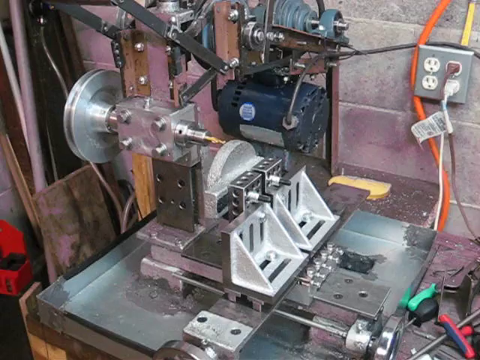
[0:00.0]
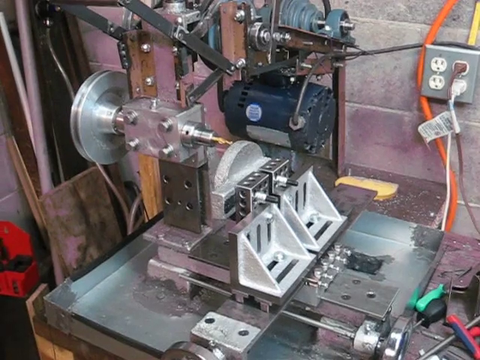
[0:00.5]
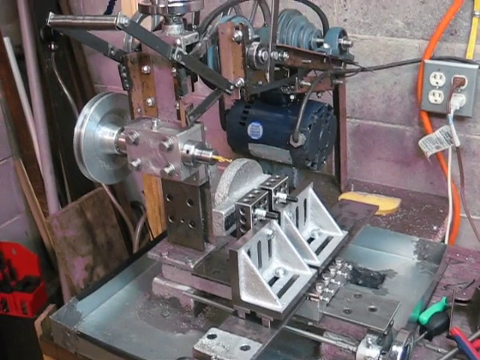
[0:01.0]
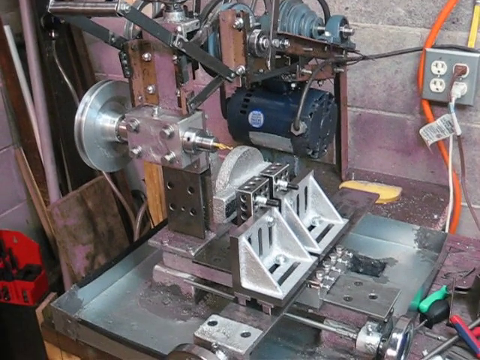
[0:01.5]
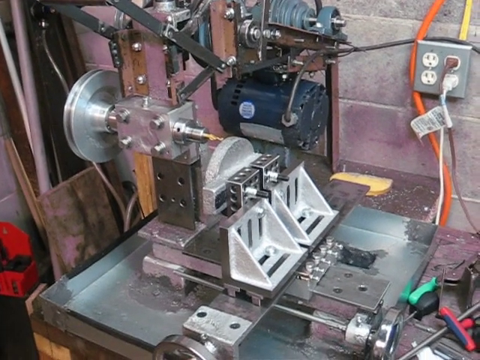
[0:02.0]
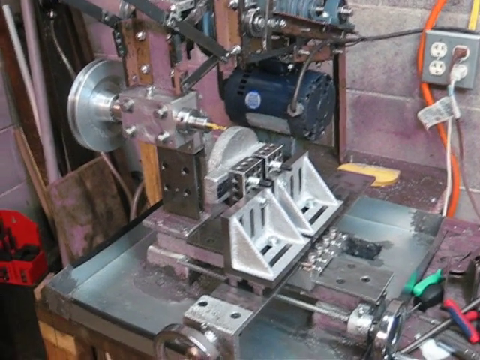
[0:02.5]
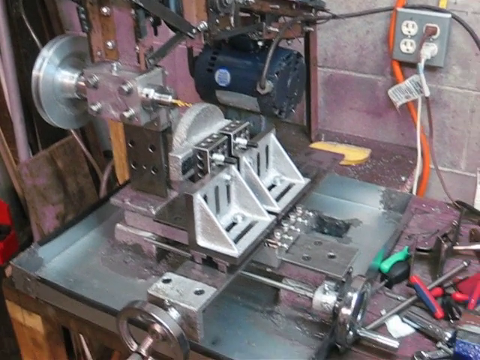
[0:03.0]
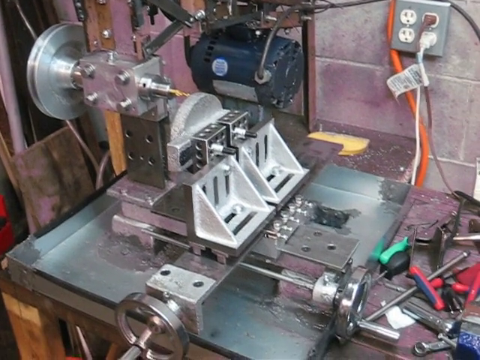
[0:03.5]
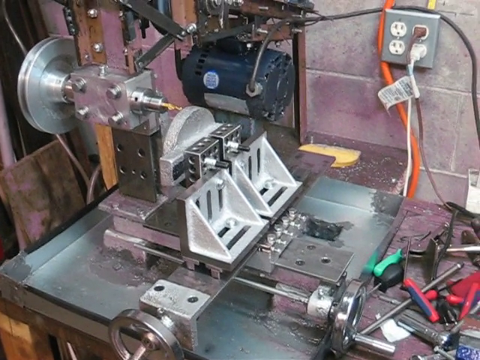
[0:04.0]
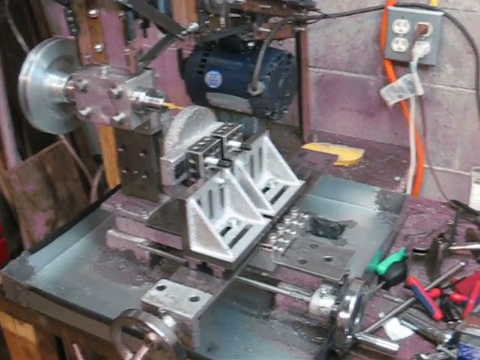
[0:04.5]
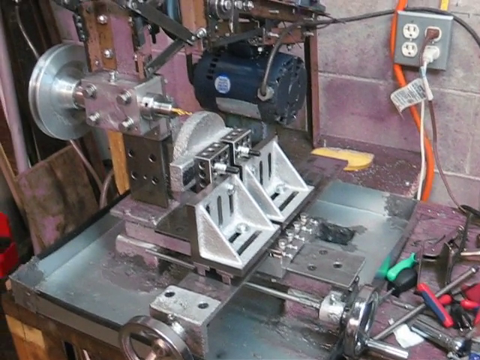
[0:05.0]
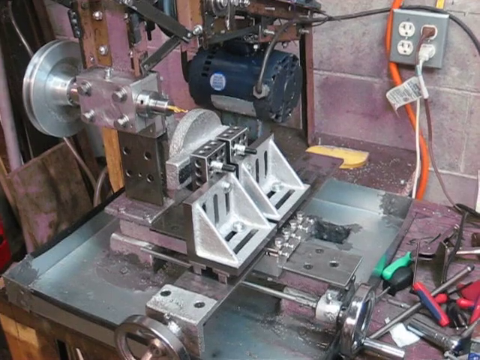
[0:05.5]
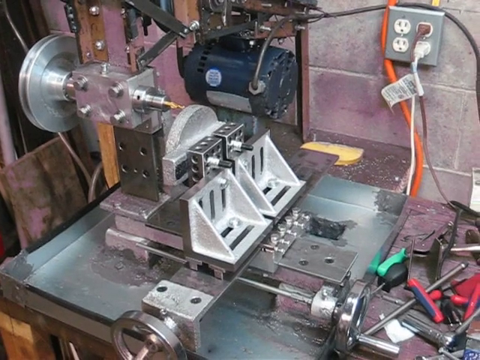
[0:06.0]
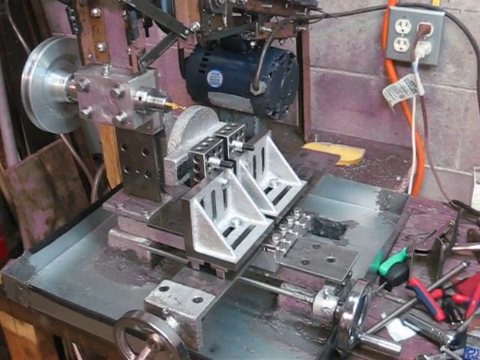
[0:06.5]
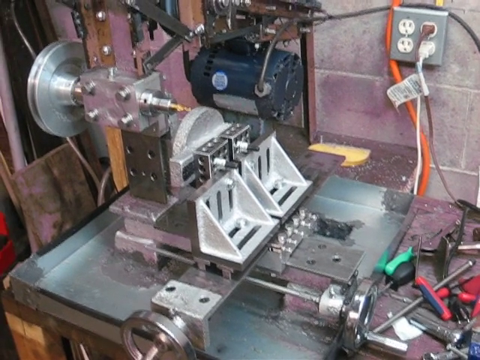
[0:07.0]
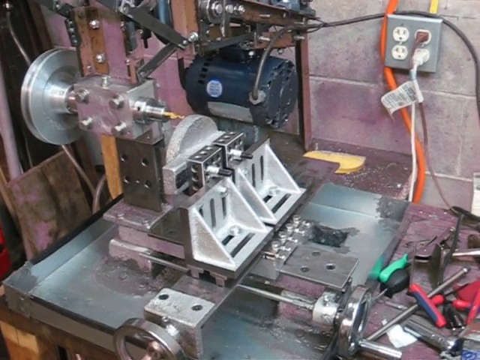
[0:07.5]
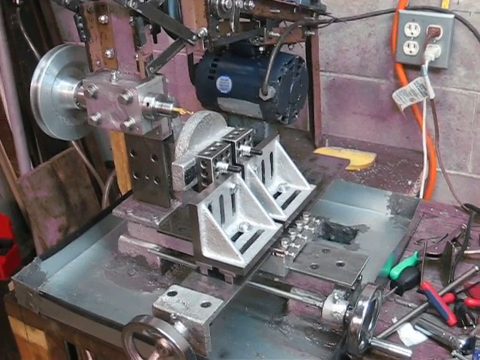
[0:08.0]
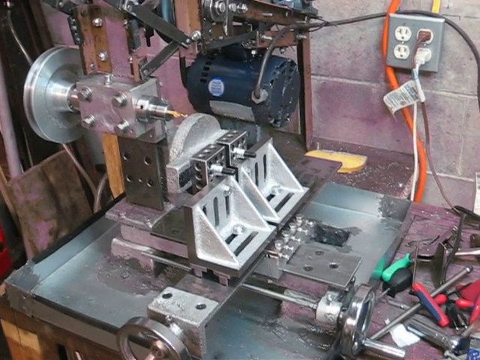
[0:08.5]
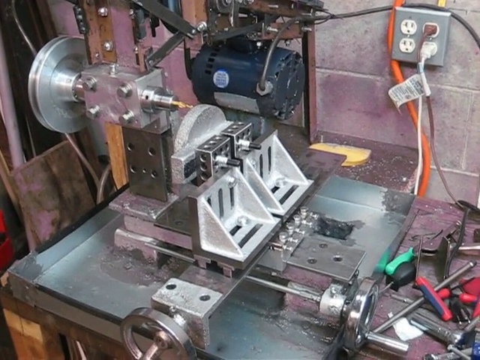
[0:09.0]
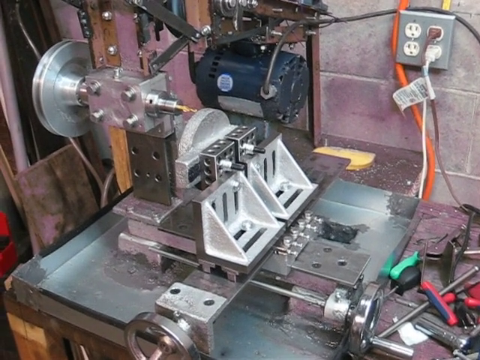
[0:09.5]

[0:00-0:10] A device that seems to be made of metal is attached to an outlet and has many compartments. One part looks like a spinning disc, and on the other side something that kind of looks like a drill comes out of the object, with more metal attachments underneath it. The device is on a table and has both metal and wood attached to it. There is also what looks like a motor encased in black metal, and many bolts are attached to the metal. On the right side are some tools.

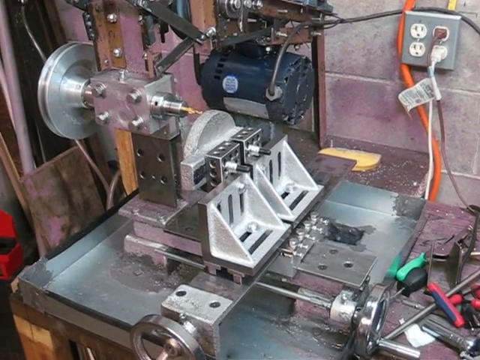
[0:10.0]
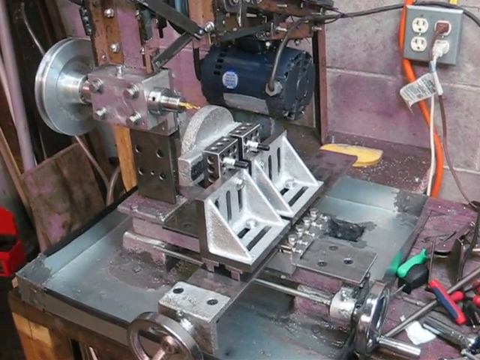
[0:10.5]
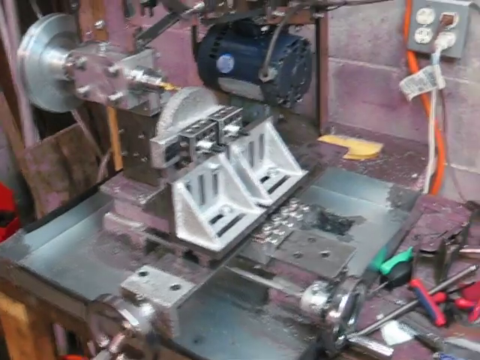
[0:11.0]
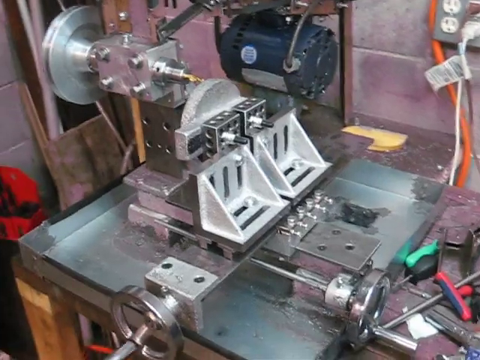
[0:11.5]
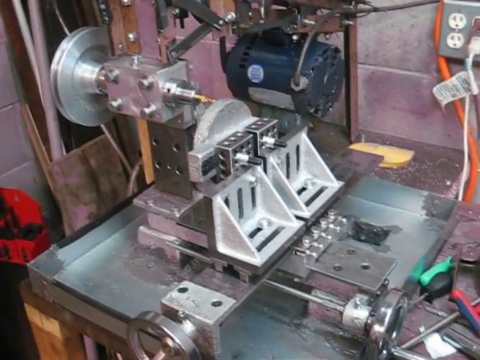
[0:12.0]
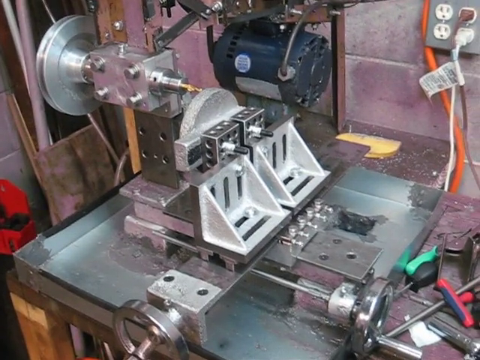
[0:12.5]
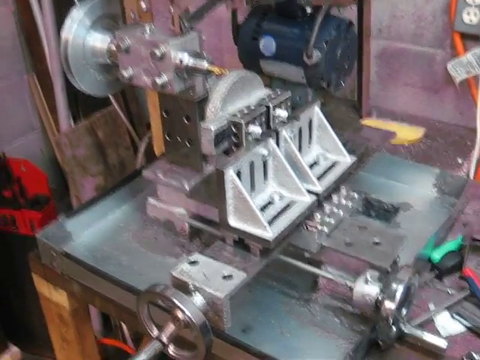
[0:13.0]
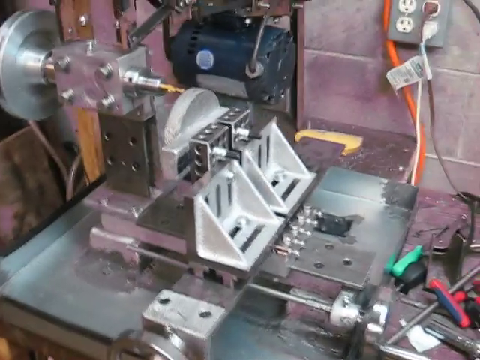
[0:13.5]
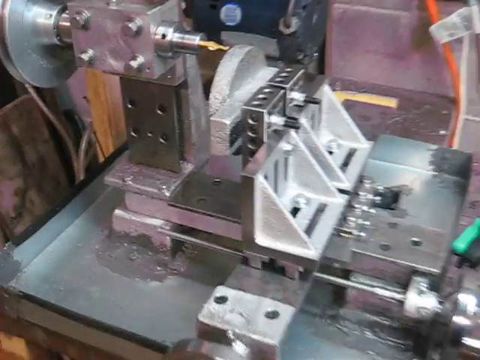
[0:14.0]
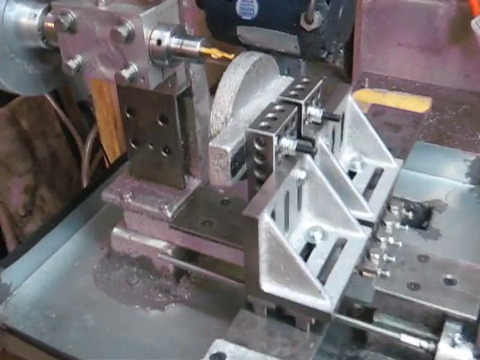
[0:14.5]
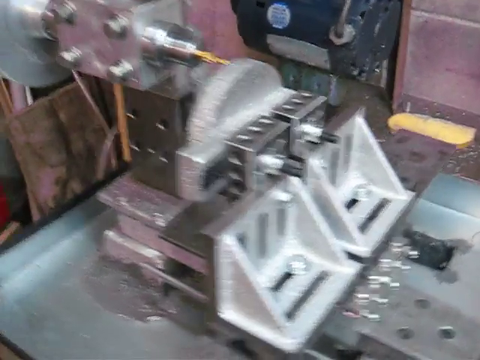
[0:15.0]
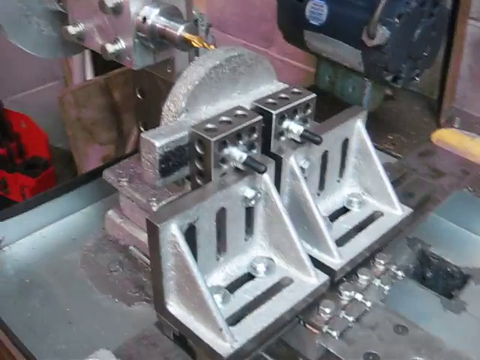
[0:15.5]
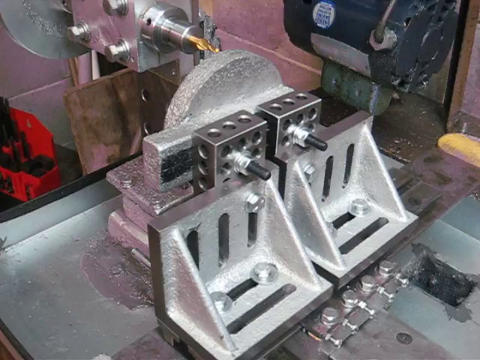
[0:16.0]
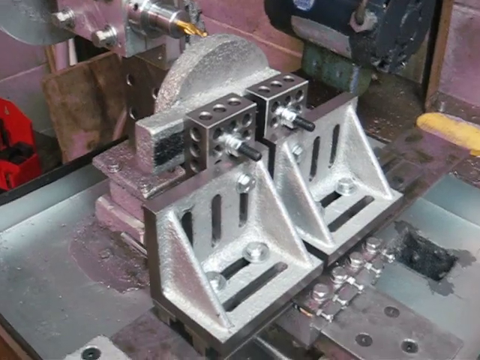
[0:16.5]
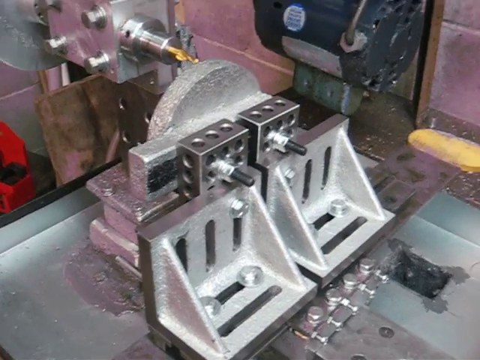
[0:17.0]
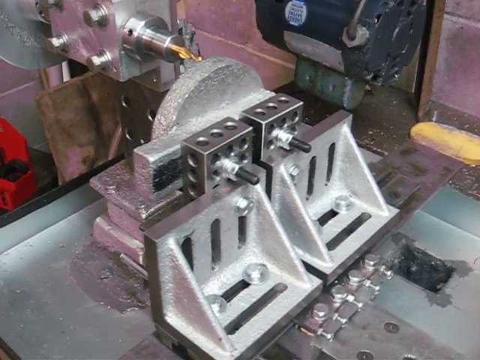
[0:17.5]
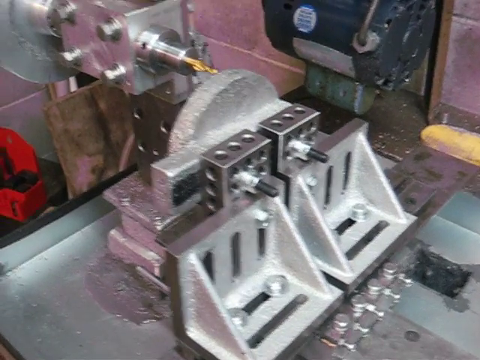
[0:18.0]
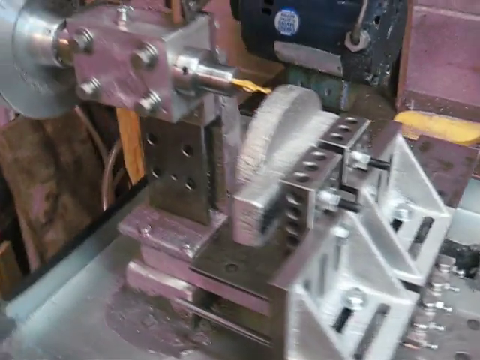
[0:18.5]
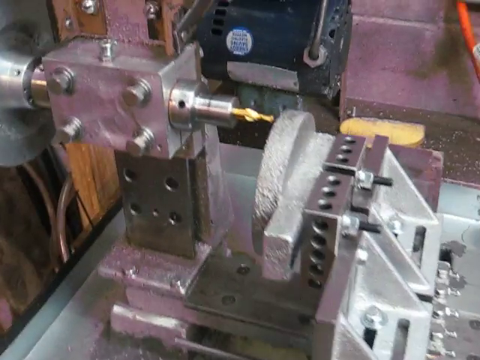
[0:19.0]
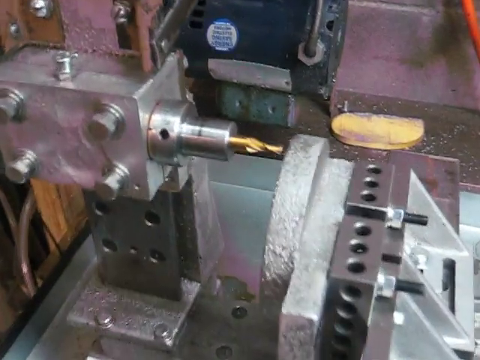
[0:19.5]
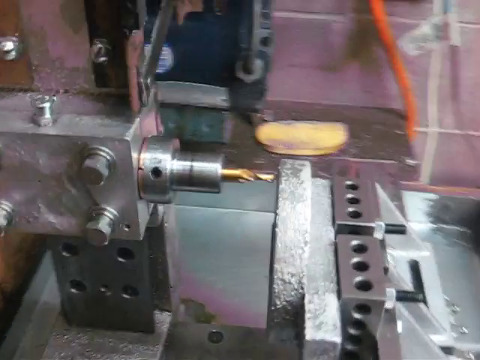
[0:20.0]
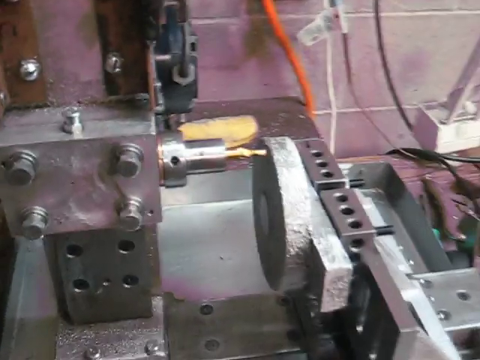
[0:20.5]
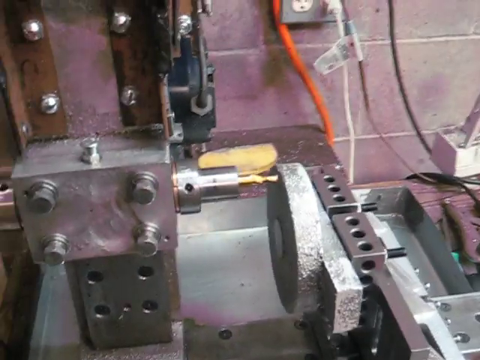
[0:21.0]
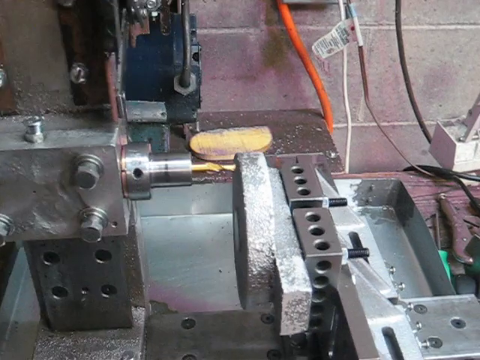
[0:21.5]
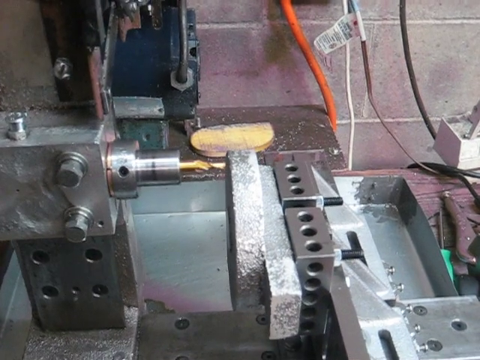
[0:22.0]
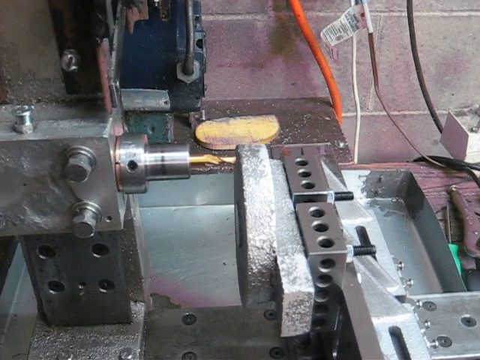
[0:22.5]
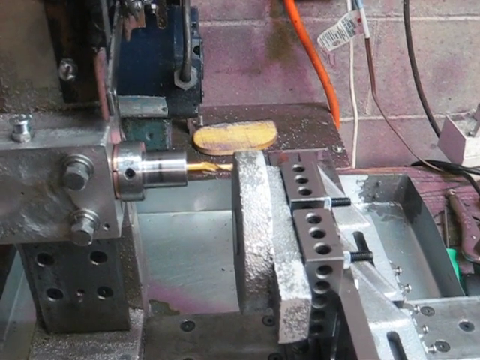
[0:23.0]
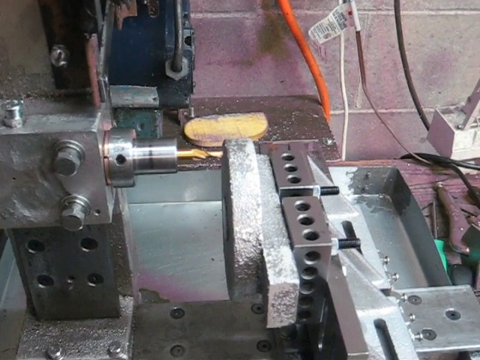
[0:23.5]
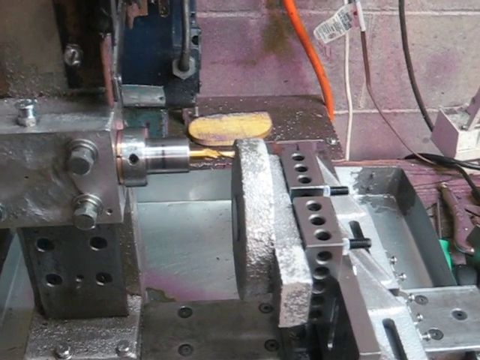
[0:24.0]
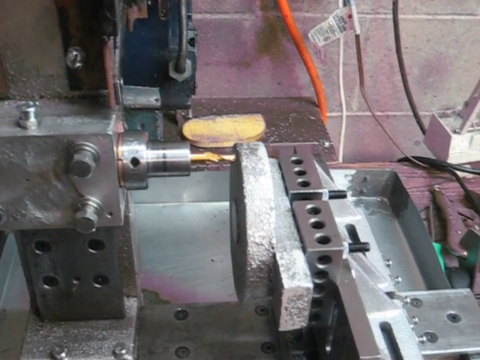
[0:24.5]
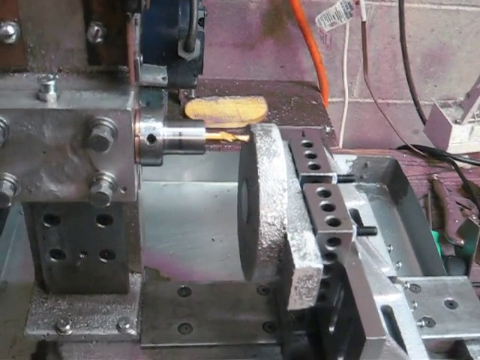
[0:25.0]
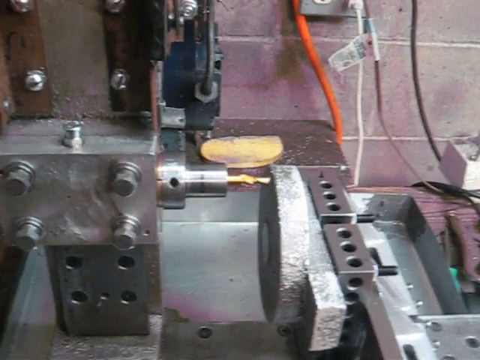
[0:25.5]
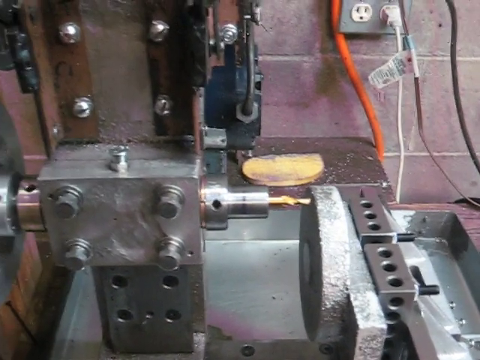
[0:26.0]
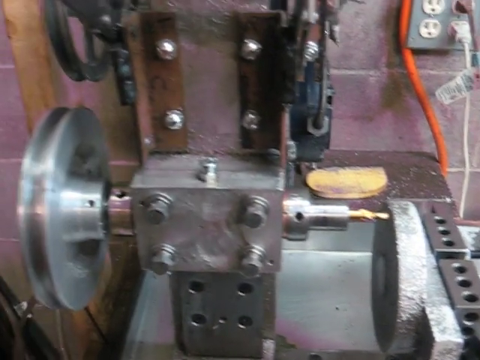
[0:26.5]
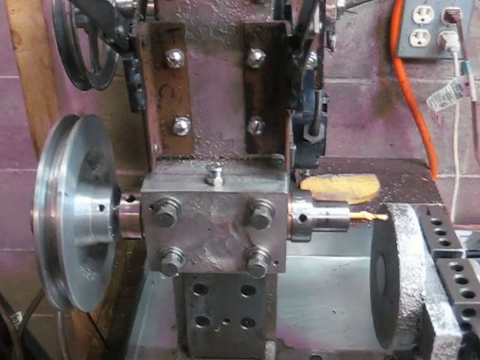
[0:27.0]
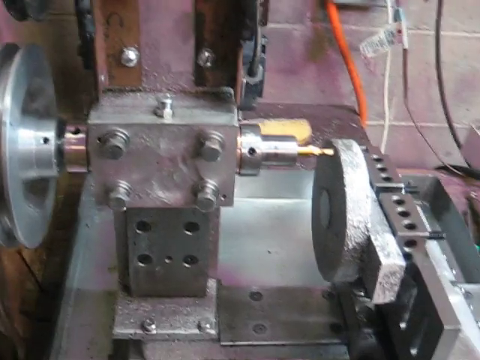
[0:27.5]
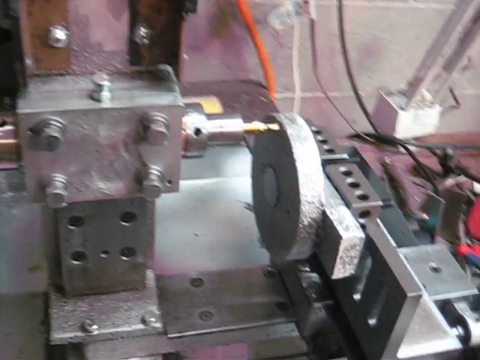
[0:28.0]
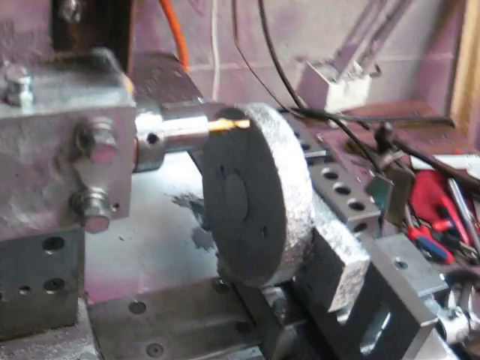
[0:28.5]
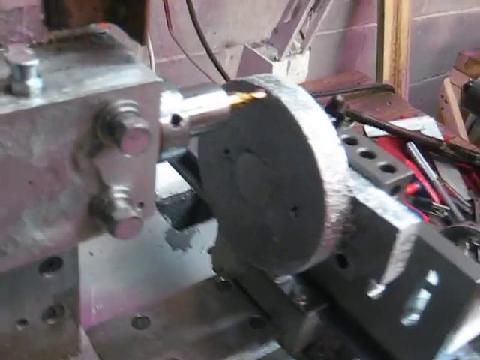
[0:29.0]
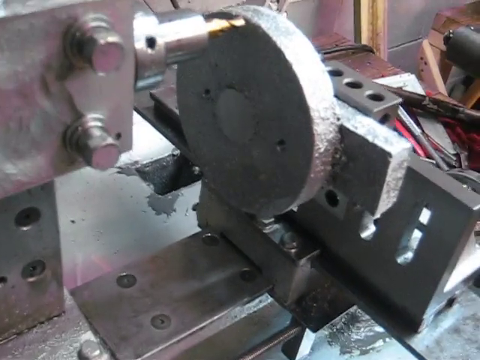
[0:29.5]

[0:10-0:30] A piece of equipment with many compartments is shown. A disc seems to be bolted to a wooden frame with four bolts. On the other side of the disc is a box with what seems to be a drill coming out of it, almost gold in color. Underneath are more compartments that all seem to be bolted together, all metal. Two parts almost look like metal bookends. The camera pans to the right, showing more of that metal: the bookend-like parts are also bolted and are not solid metal, having empty strips like slits in them.